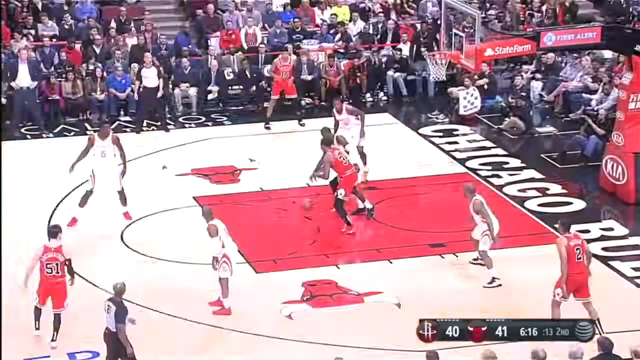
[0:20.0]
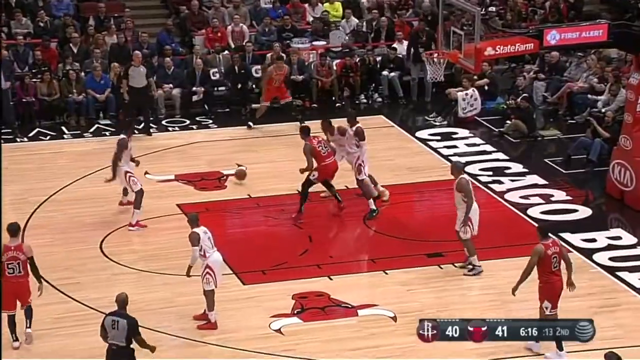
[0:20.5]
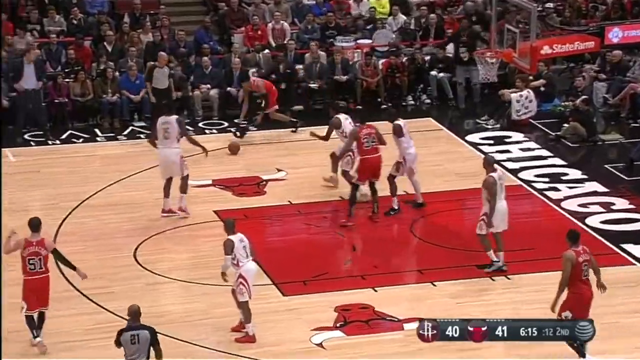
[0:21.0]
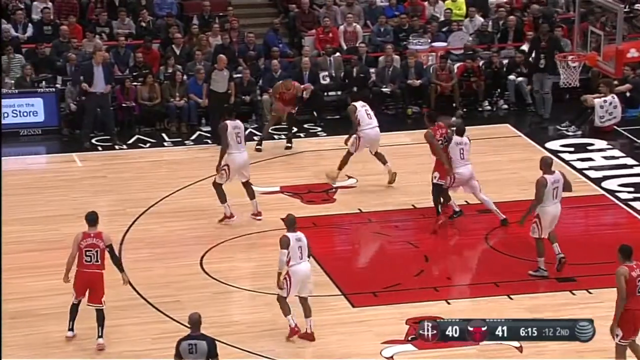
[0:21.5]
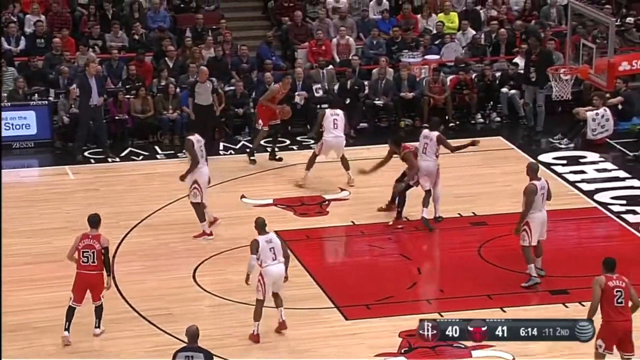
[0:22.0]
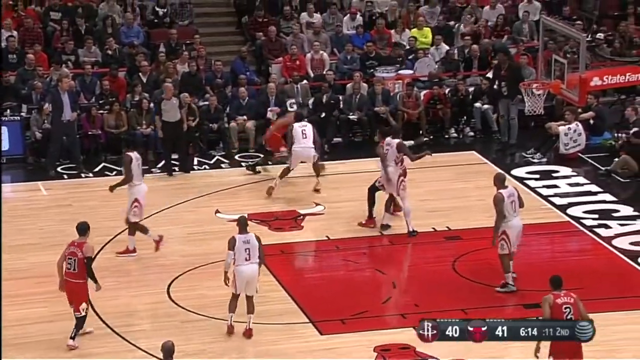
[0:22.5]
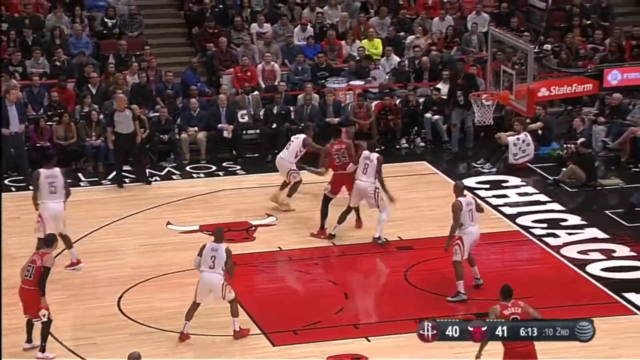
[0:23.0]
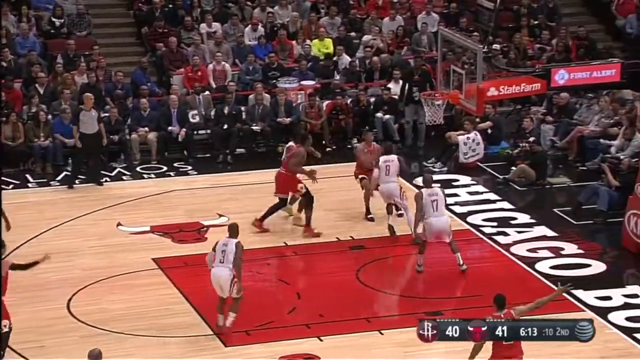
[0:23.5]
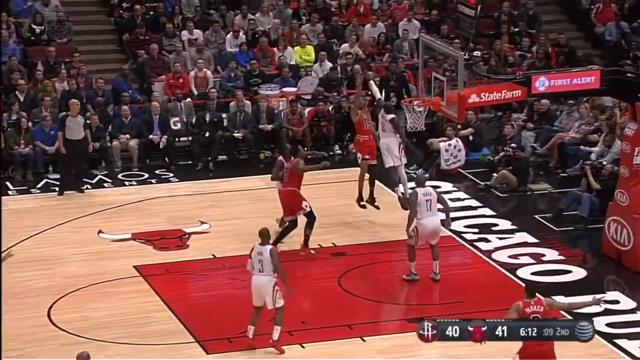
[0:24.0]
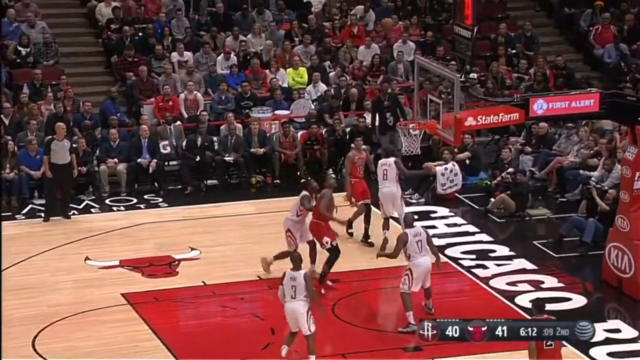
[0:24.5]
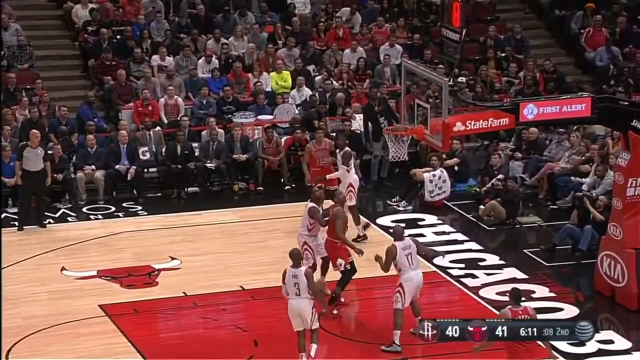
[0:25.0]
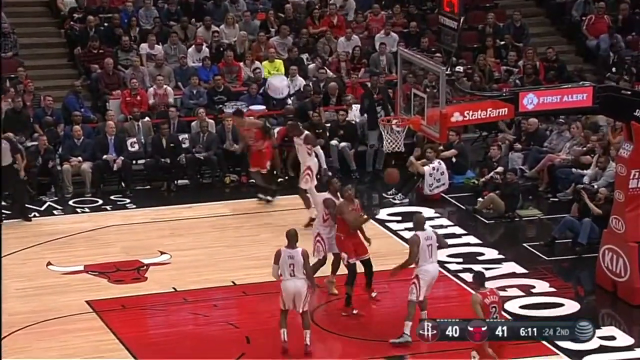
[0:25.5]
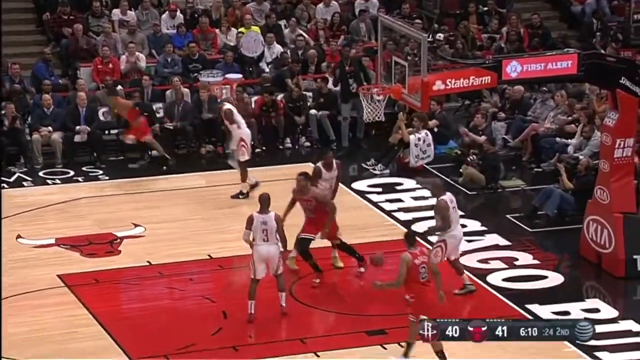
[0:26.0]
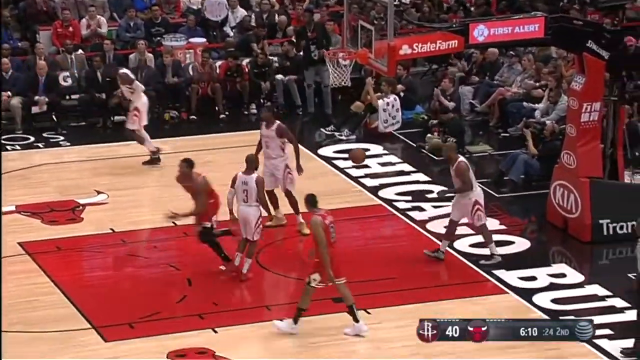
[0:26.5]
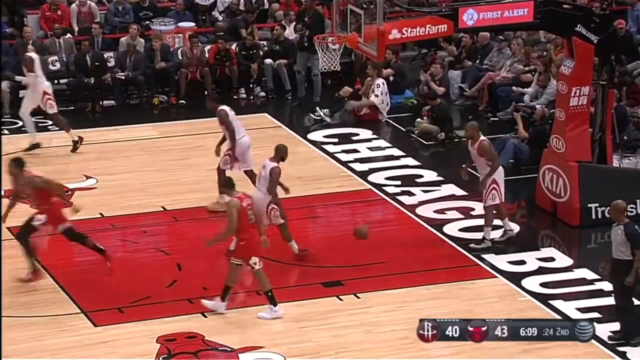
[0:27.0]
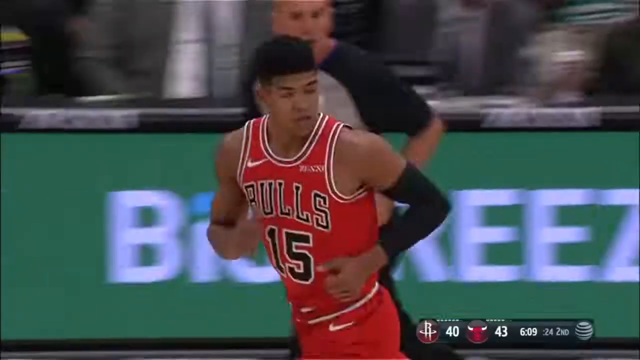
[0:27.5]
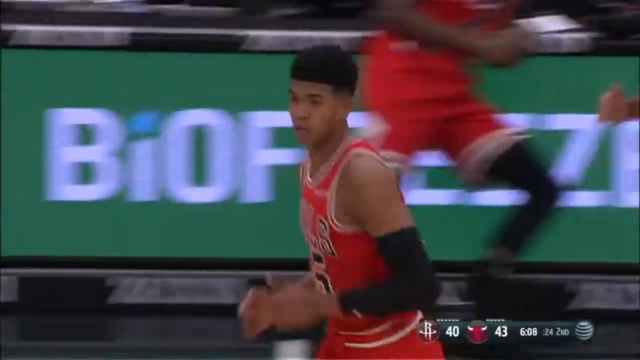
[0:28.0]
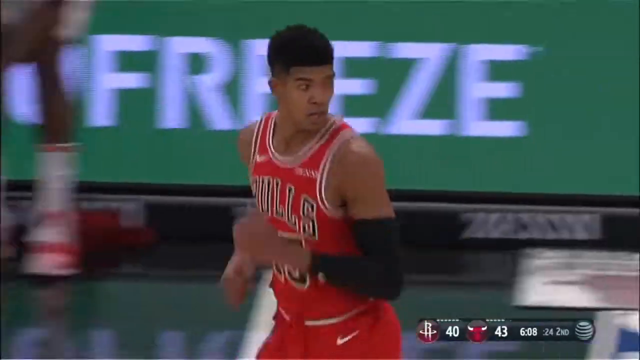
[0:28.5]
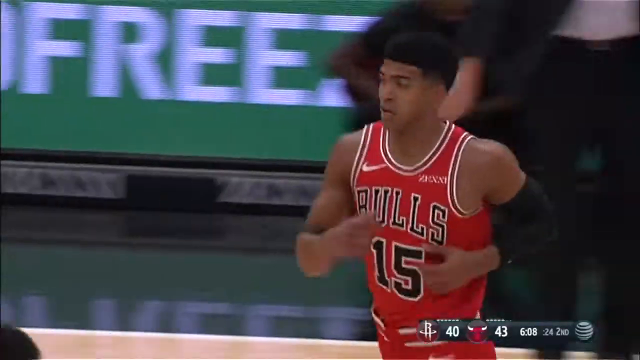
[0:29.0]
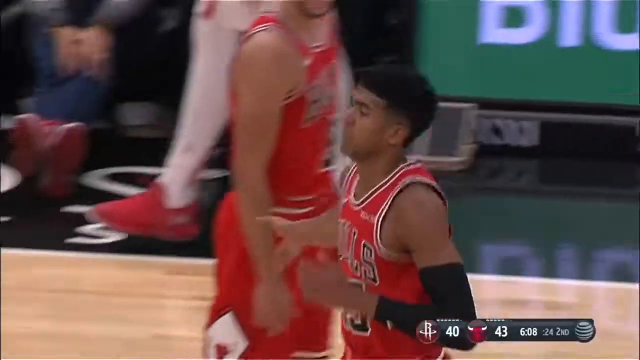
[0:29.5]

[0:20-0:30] Number 15 of the Chicago Bulls catches a ball that kind of rolls almost off the court, then shoots and scores. Number eight tries to block the shot but fails. The camera zooms in to number 15, who is proud, happy and smiling. The score is HOU 40 and Chicago Bulls 41, and at the end there are six minutes and eight seconds left on the clock. The game is close, and the audience is watching intensely.